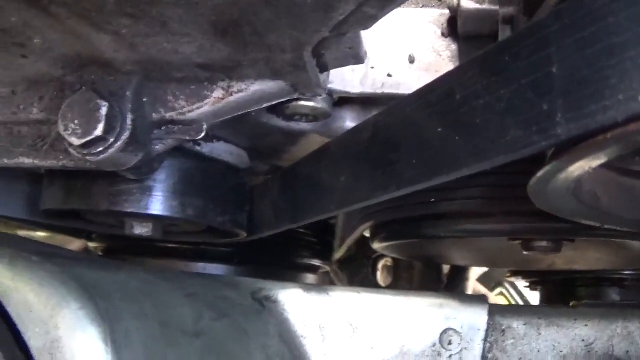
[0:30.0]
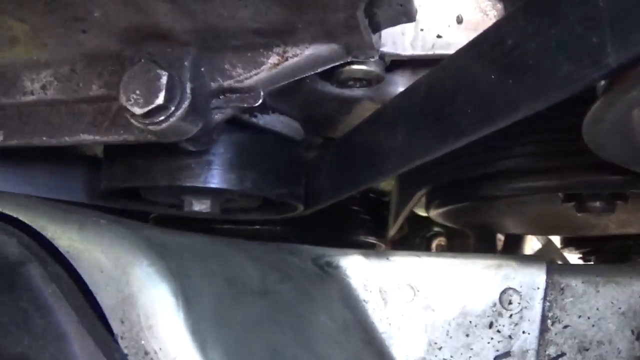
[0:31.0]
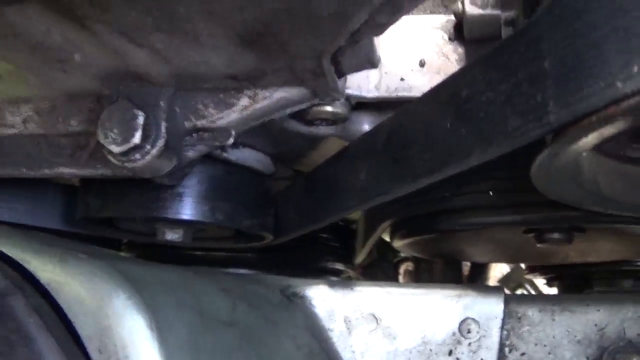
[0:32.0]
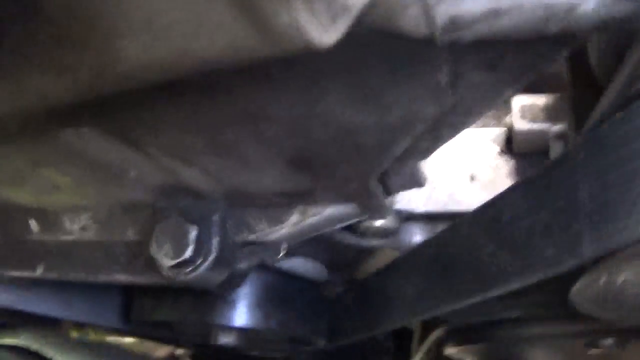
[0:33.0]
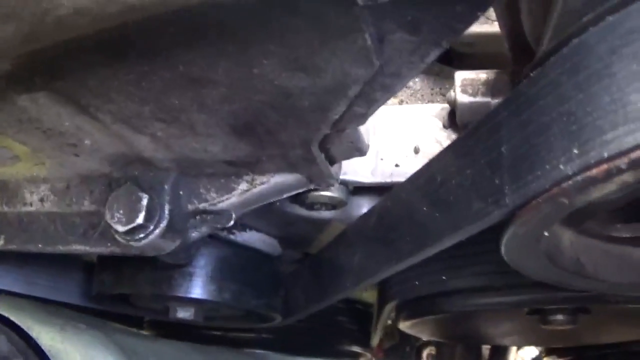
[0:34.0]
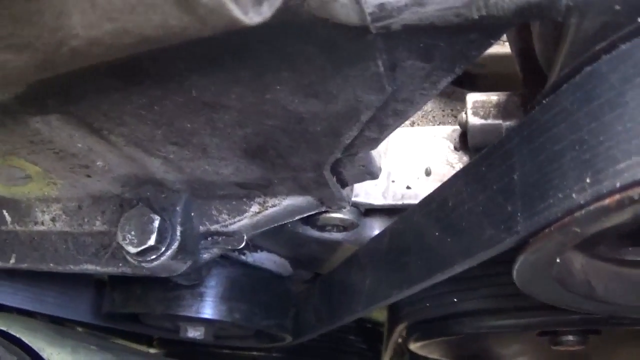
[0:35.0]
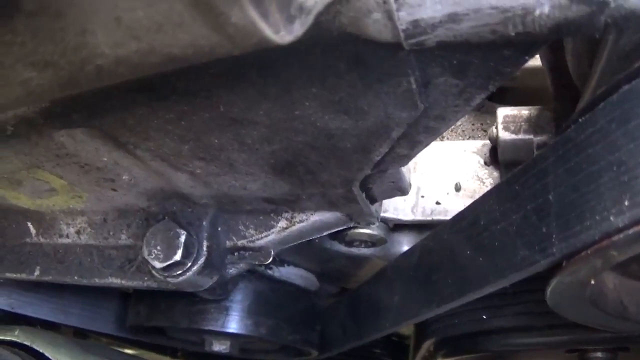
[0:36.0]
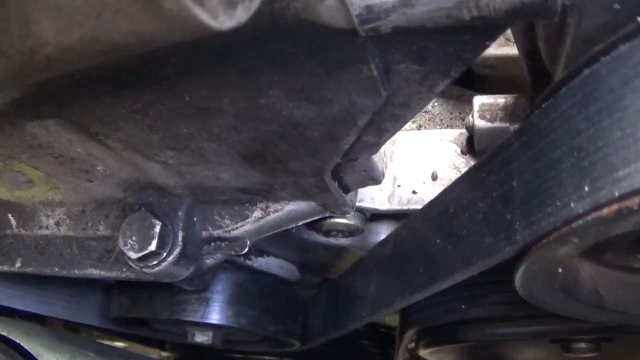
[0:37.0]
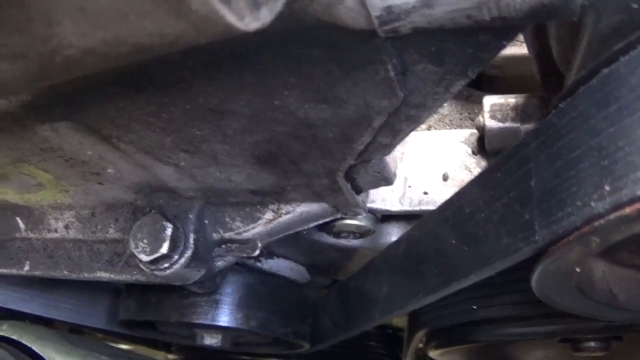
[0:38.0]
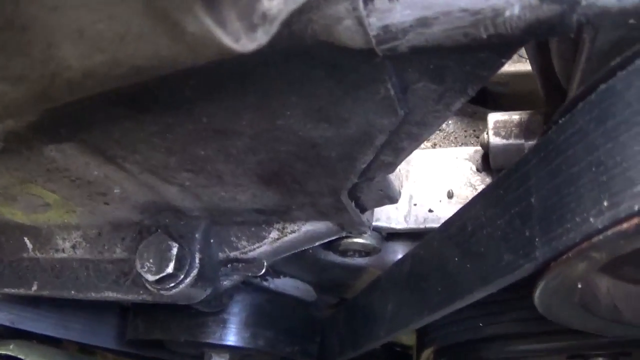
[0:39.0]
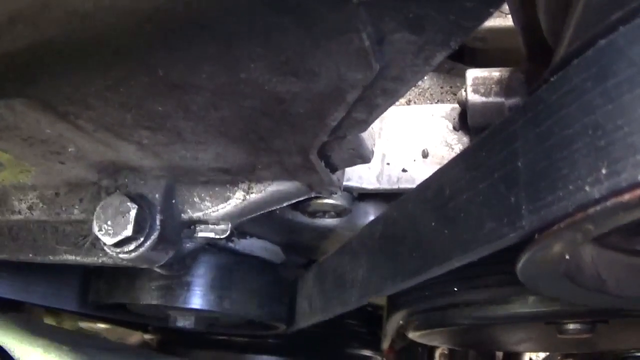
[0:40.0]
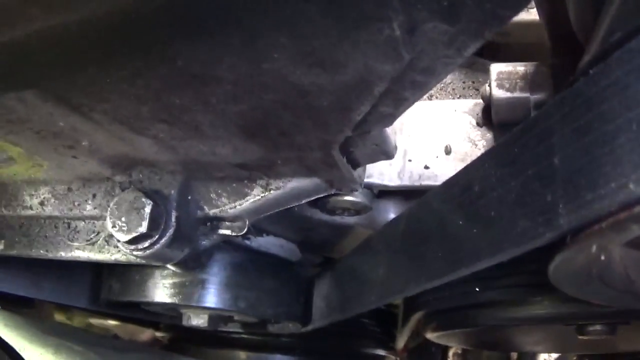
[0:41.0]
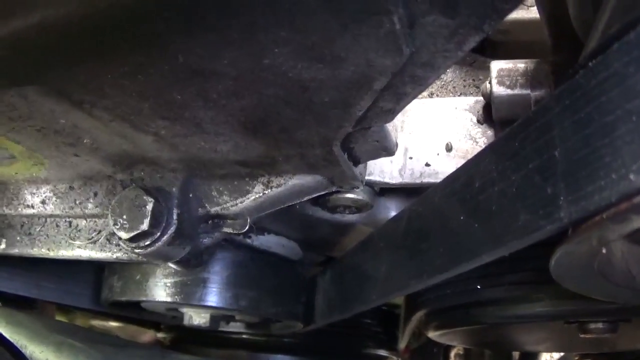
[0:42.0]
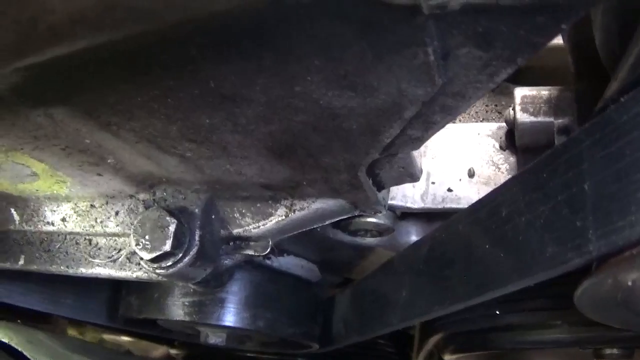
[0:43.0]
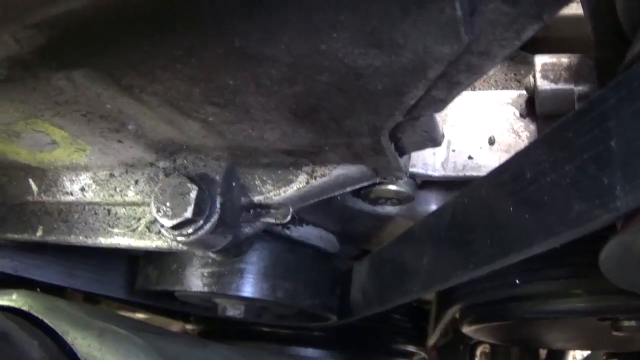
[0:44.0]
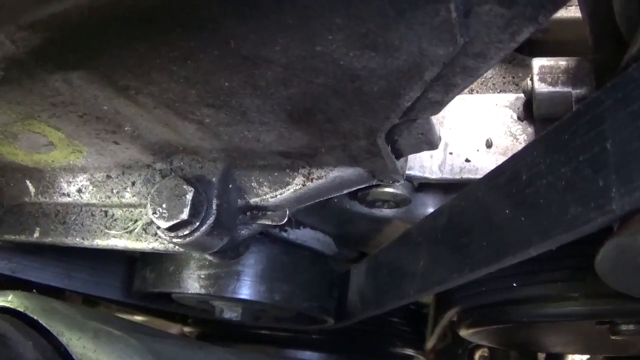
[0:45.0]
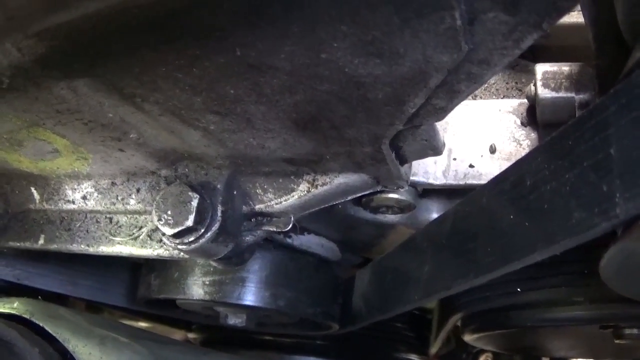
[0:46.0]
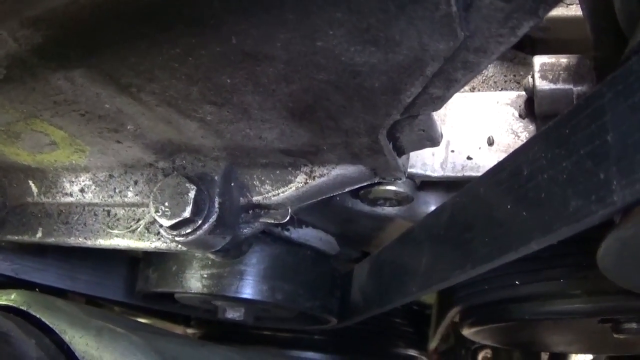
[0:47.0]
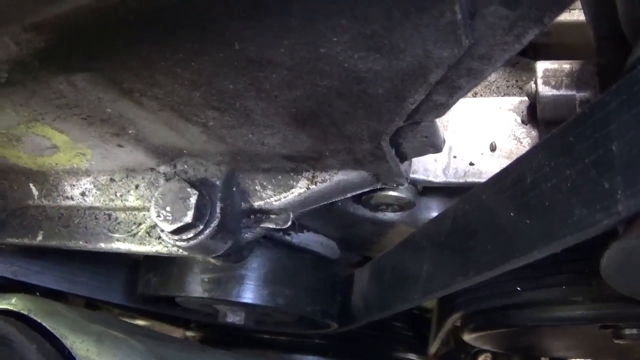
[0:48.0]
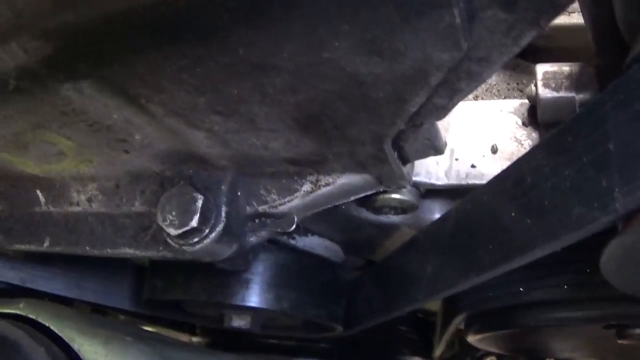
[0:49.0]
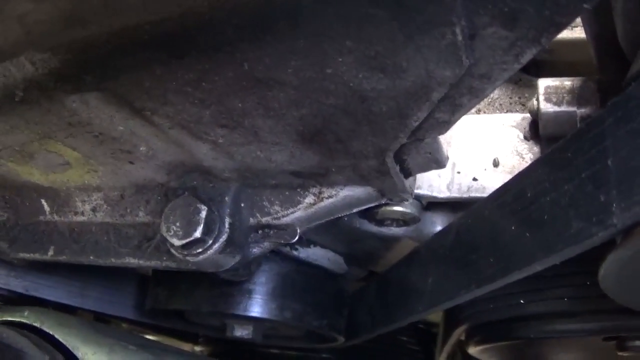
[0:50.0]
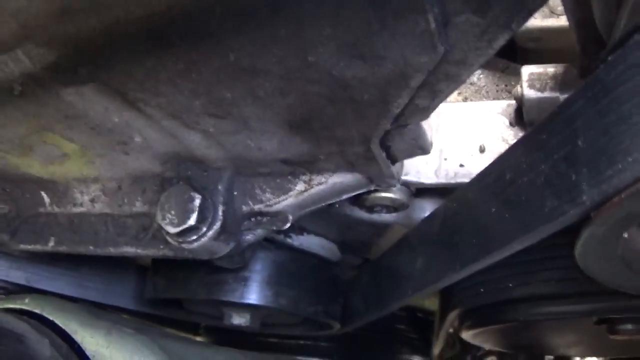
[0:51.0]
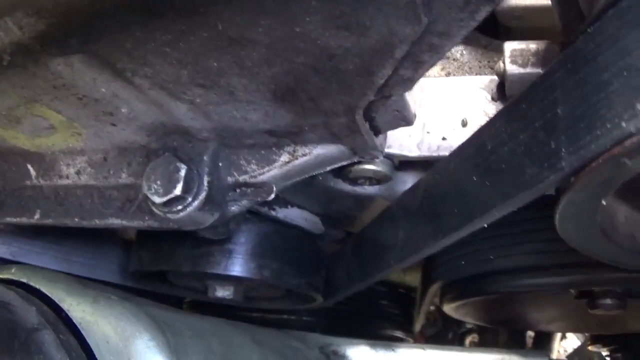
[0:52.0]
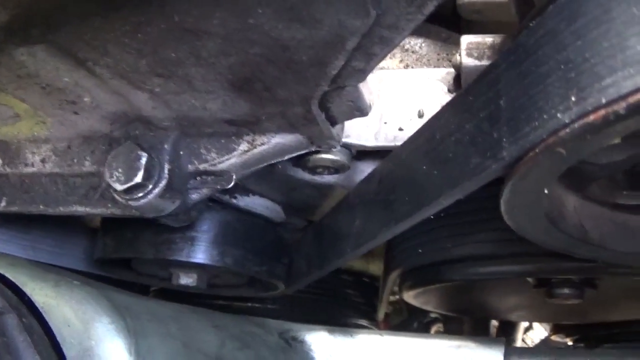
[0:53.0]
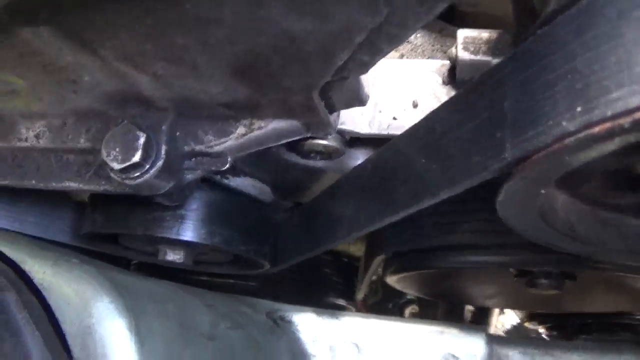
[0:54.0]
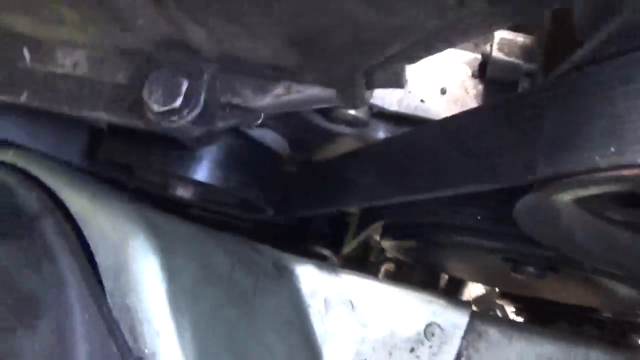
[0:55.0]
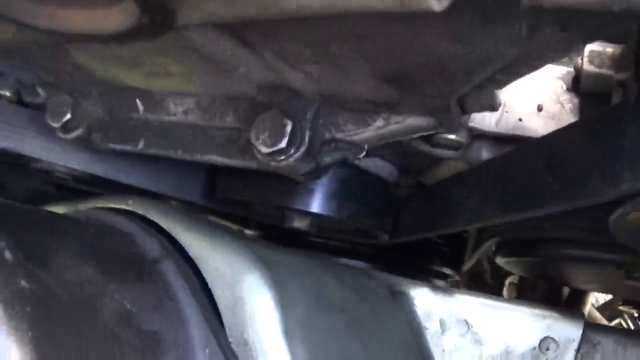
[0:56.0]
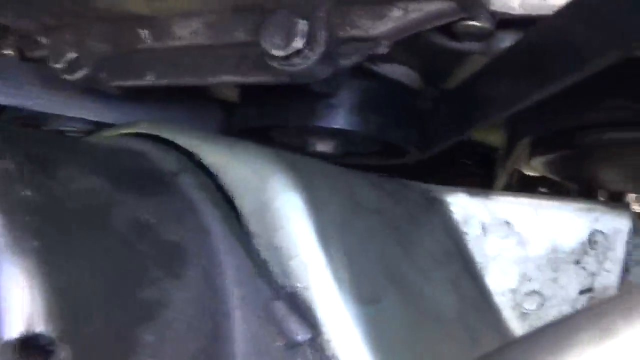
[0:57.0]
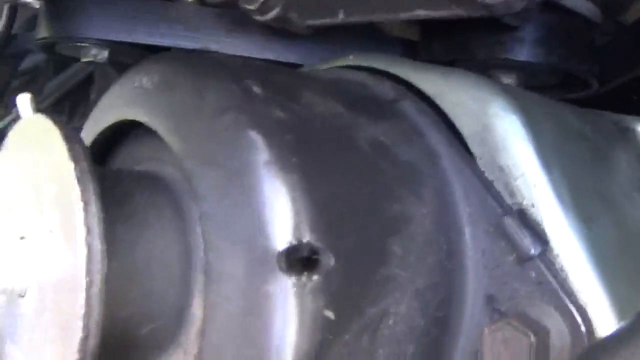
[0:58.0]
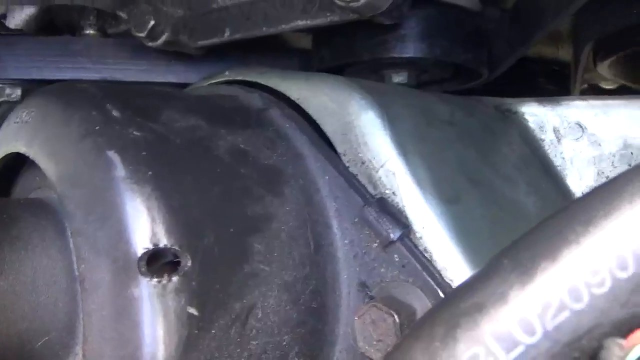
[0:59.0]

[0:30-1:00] The overhead shot of the engine continues, with the camera still shaky as if held by hand. The camera hovers over a belt and roller assembly. It appears that a flashlight might be pointed down on the engine, or perhaps it is just natural light filtering in. The camera jostles, showing a combination of belt, roller, bolts and metal flashing.